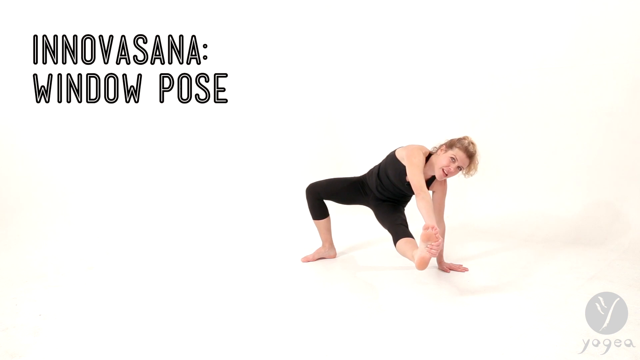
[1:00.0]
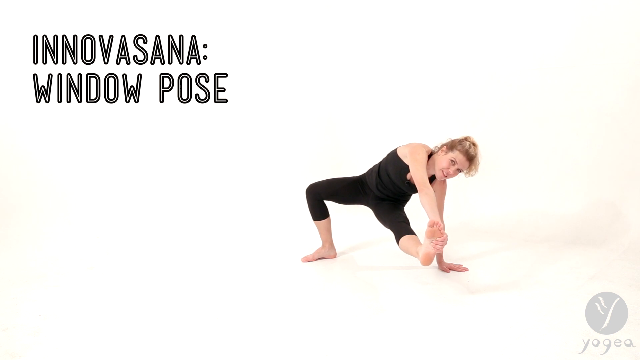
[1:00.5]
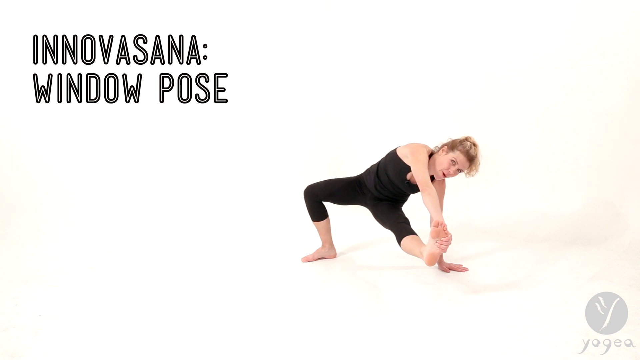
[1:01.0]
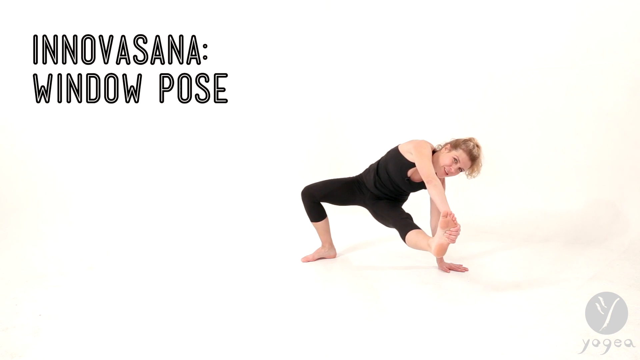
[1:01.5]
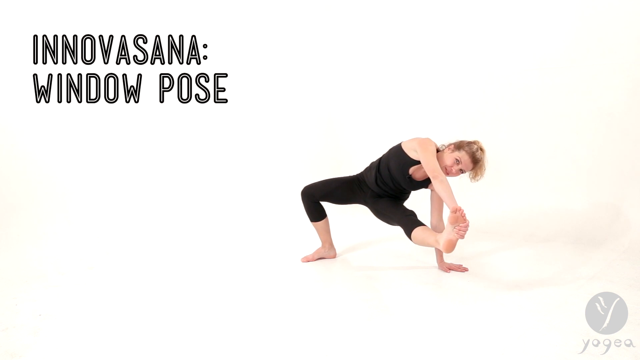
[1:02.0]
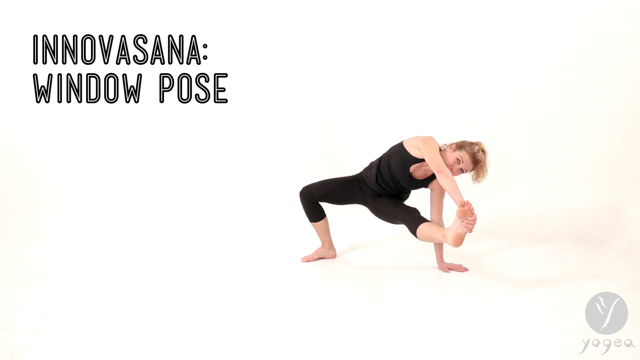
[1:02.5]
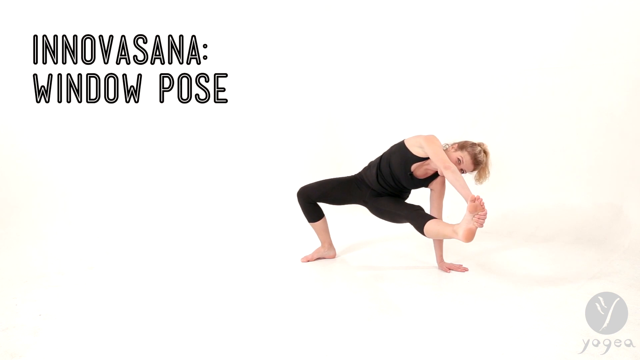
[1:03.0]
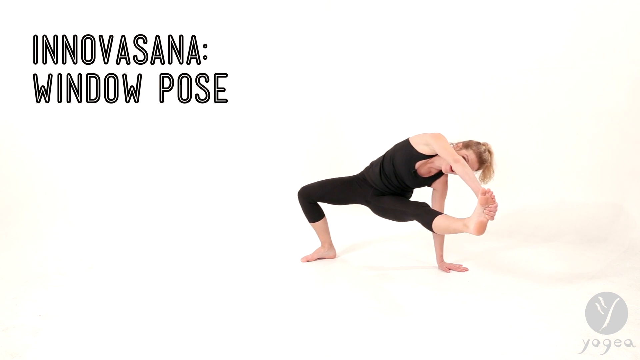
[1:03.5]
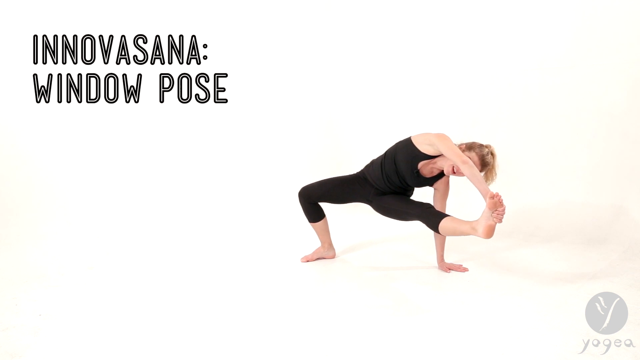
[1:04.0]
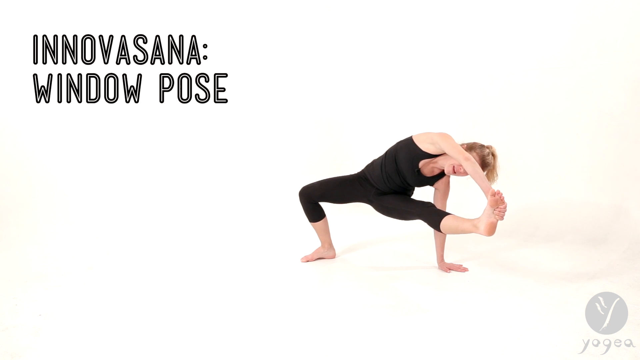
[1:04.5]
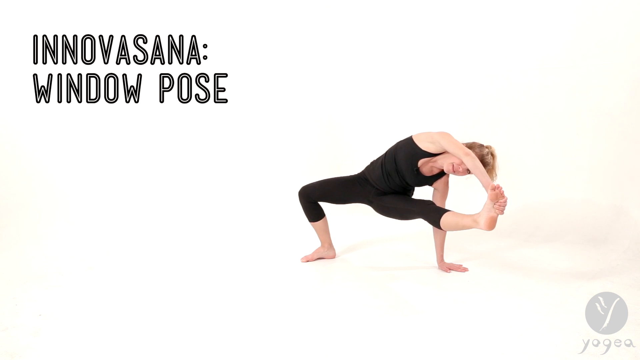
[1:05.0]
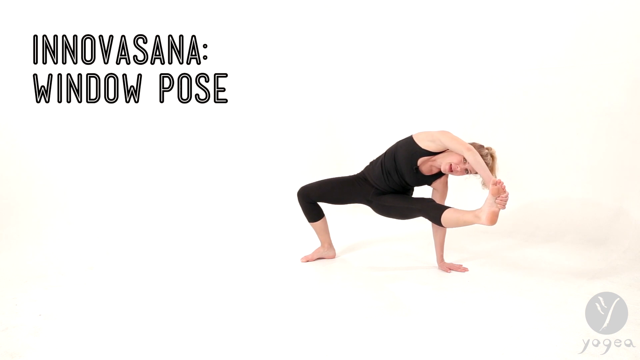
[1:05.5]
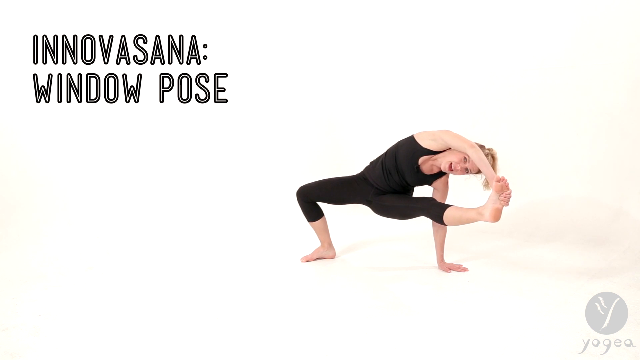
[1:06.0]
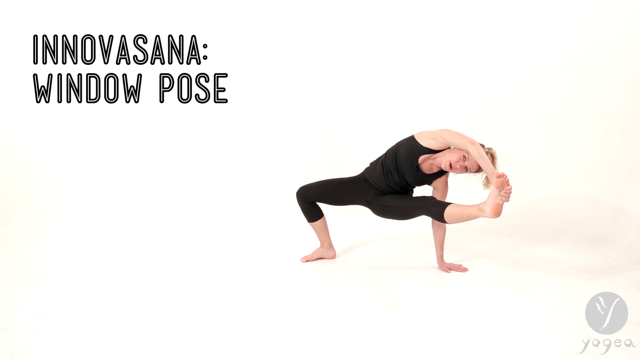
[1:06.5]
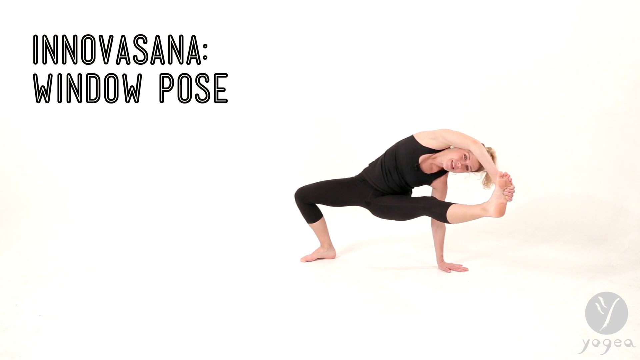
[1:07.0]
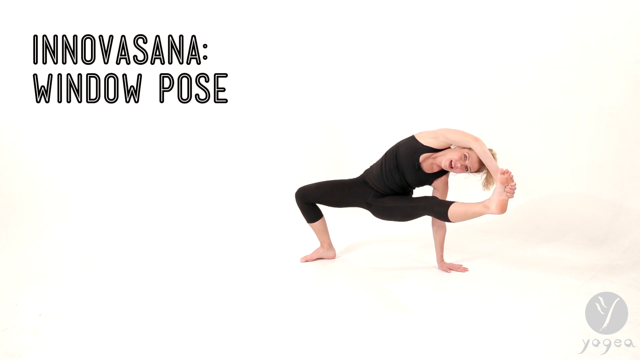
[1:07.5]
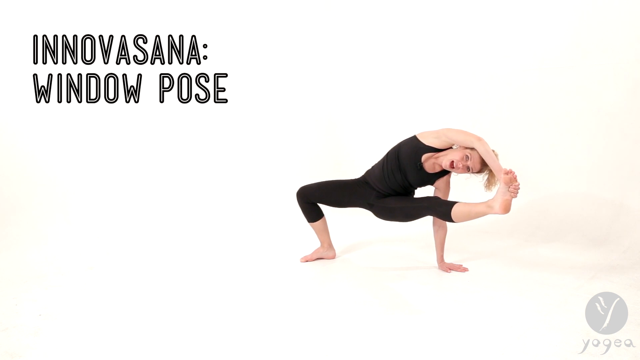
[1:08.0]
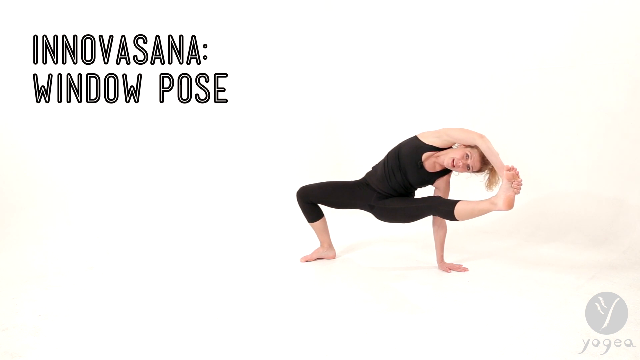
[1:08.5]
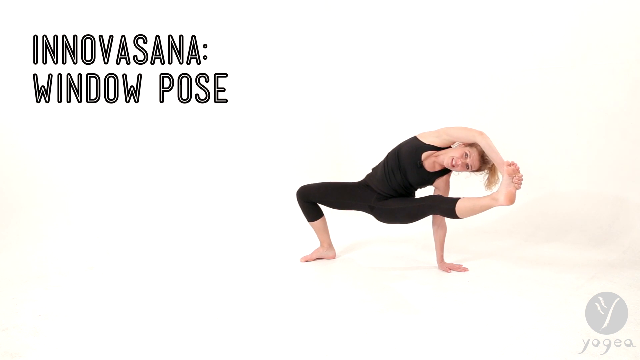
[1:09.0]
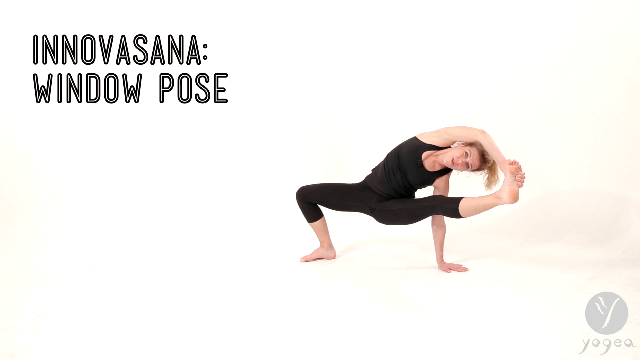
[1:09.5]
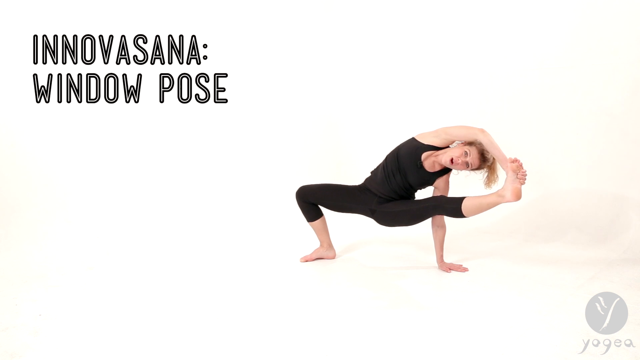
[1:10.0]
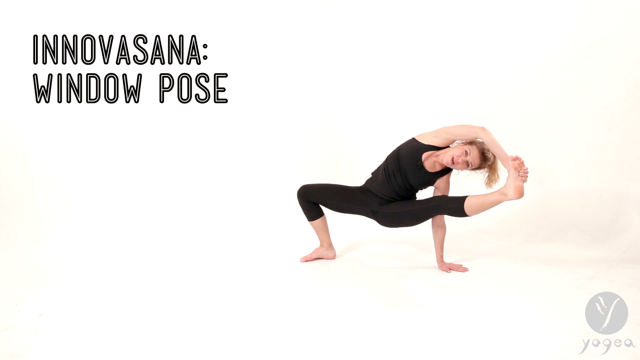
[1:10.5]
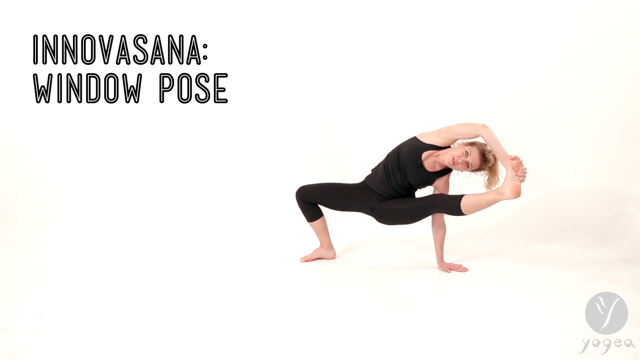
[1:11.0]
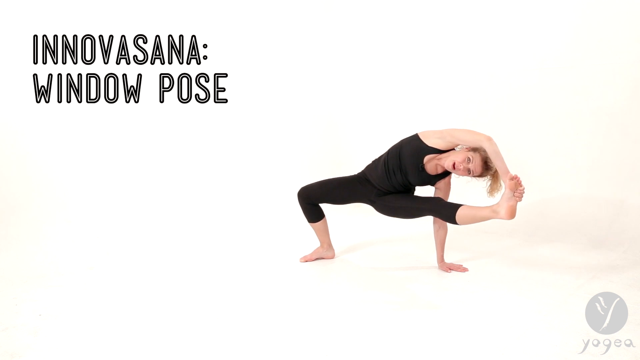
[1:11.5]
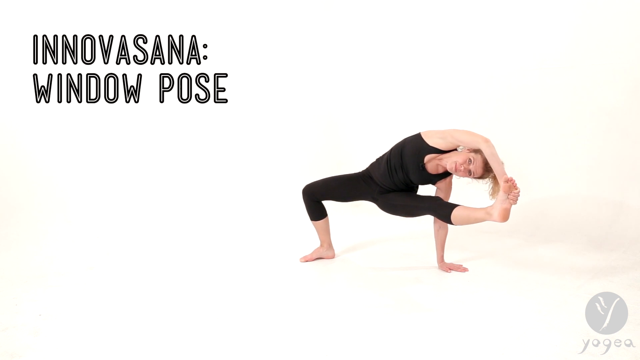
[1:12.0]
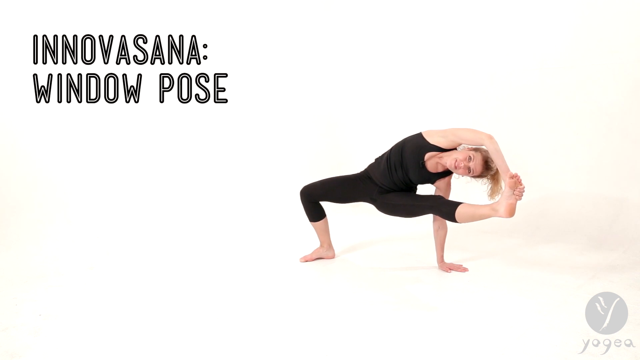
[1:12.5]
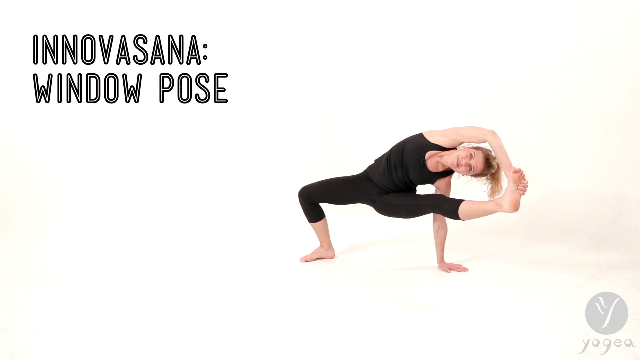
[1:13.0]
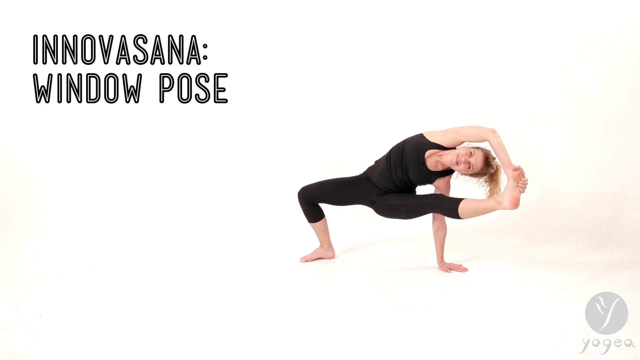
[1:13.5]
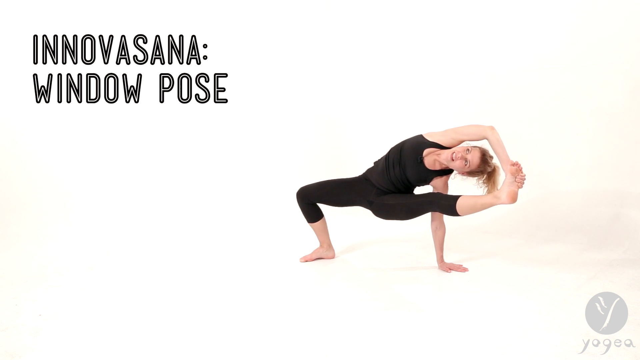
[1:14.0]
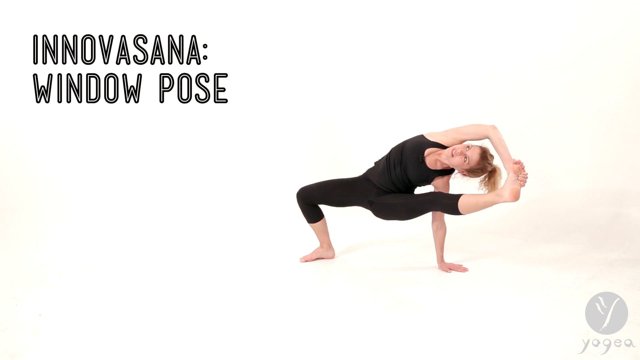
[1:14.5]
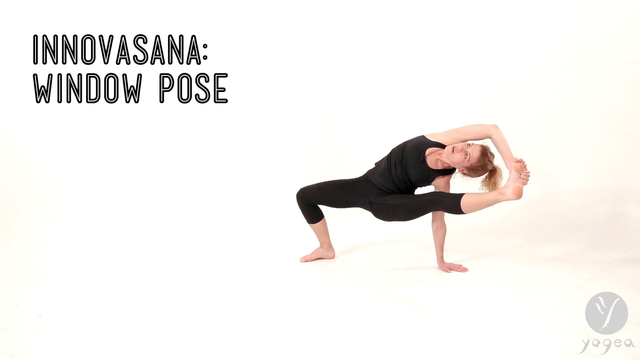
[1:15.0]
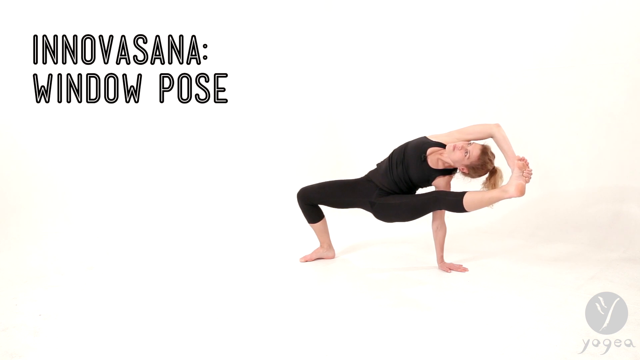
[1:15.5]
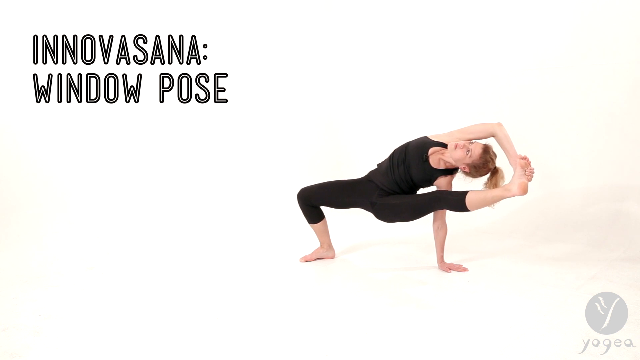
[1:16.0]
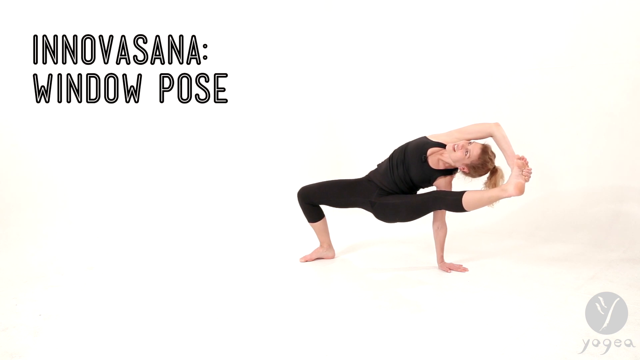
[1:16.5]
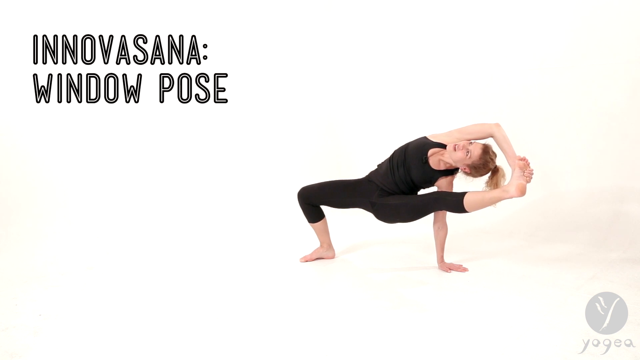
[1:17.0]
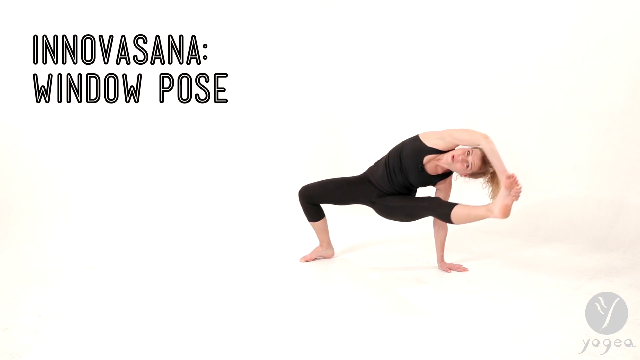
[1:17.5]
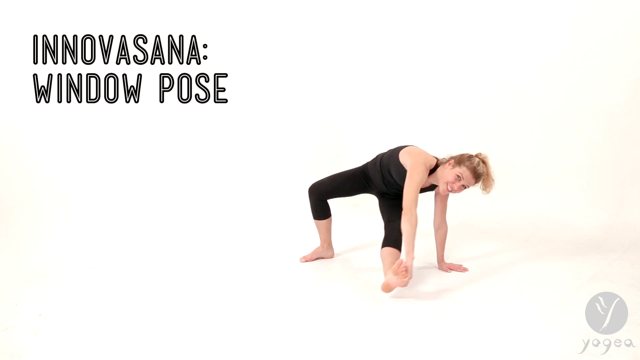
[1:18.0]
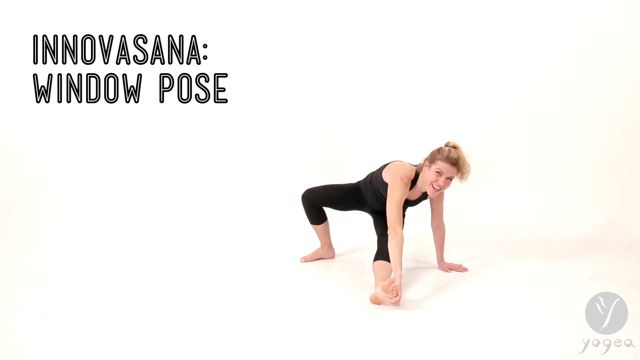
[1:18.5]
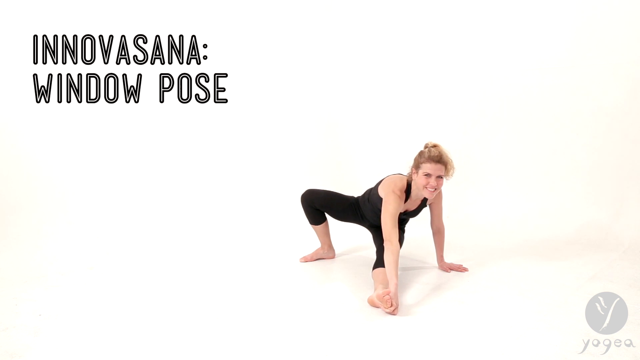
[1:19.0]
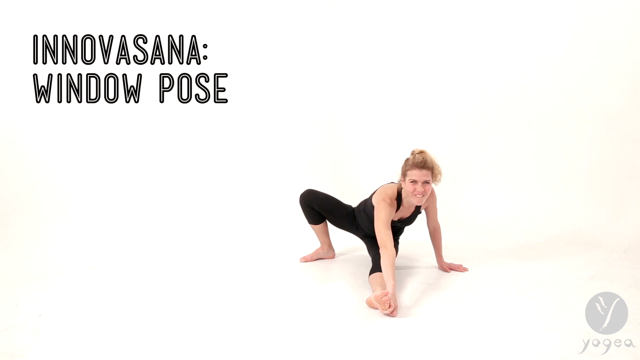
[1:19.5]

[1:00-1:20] A woman holds a position on the floor, dressed in a black halter-neck top leotard, her blonde hair pulled up behind her in a loose, messy bun. In the upper left corner of the screen, text reads "Innovasana: Window Pose". Her right knee is bent and supporting her weight, and she also supports her weight with her left hand, palm placed flat on the floor. She holds the toe of her left foot with her right hand while facing forward toward the camera, in a very awkward-looking pose. Holding the position, she gradually pulls her left foot more to the side, holding it straight forward as she speaks. She moves the foot up and pushes her head forward through the arch that has formed, between her right arm and her left foot. She keeps speaking and holds the pose for a while, extending and turning her neck to face slightly upward through the arch of her arm and foot. She then releases her left foot and relaxes, putting her body weight down.